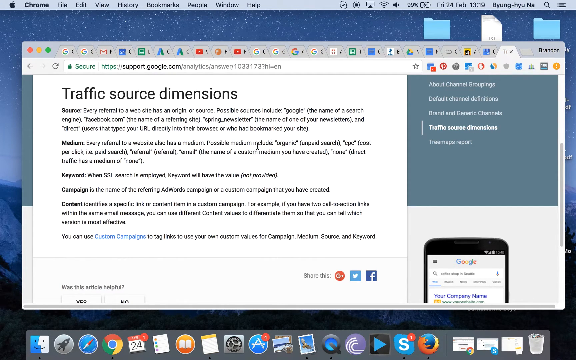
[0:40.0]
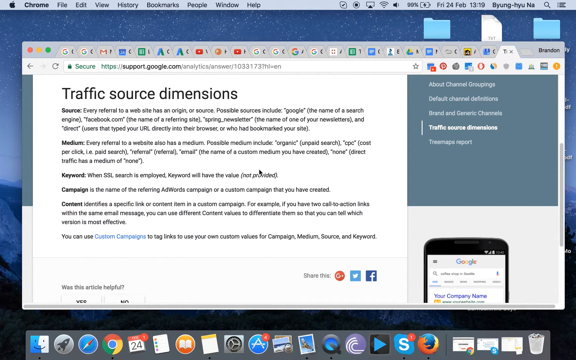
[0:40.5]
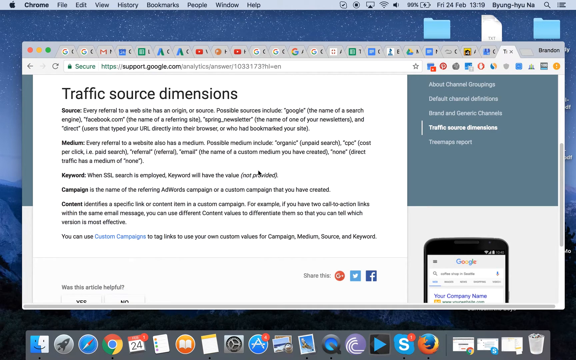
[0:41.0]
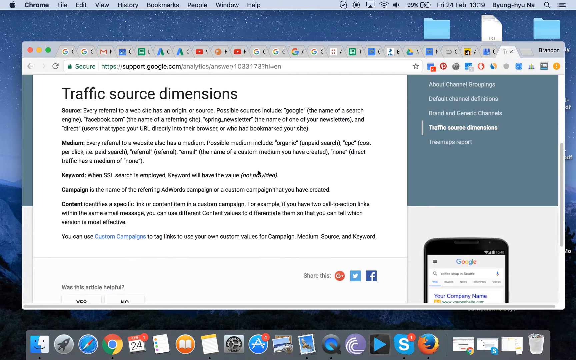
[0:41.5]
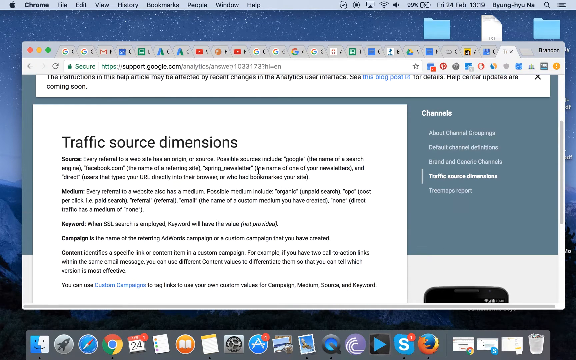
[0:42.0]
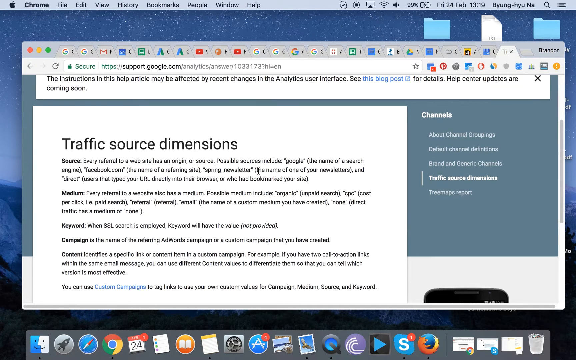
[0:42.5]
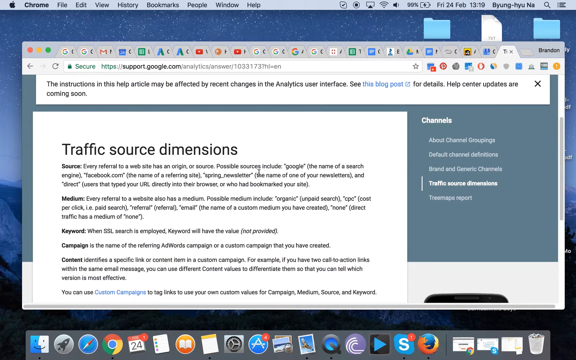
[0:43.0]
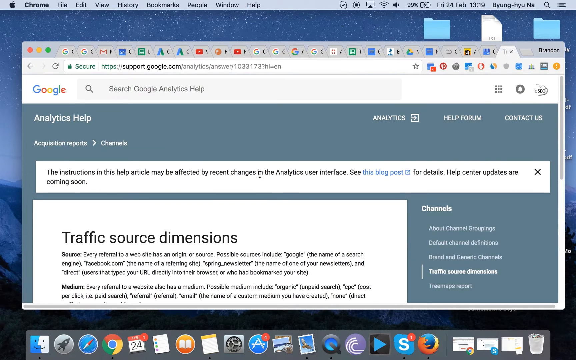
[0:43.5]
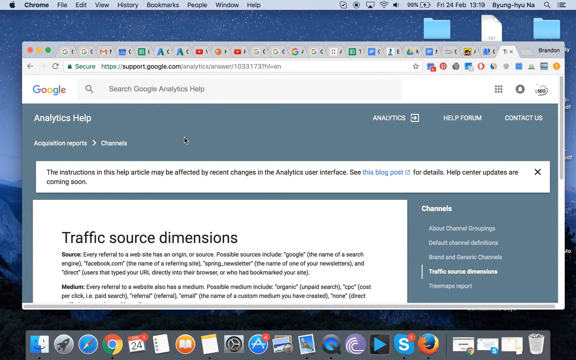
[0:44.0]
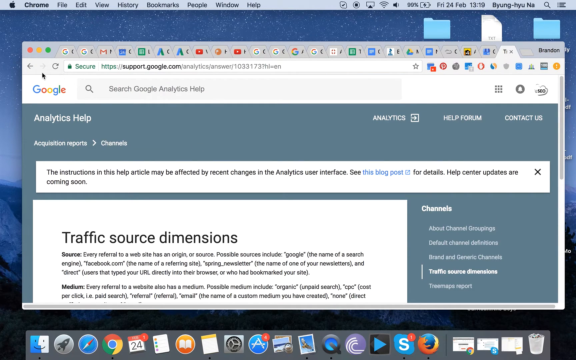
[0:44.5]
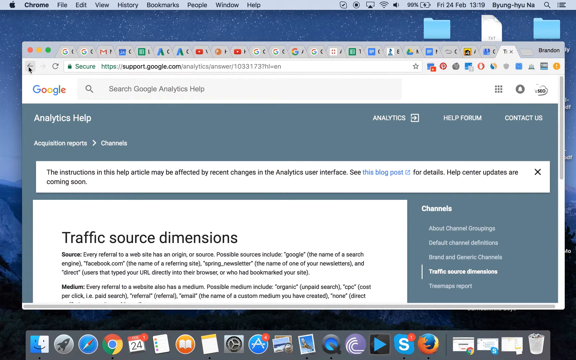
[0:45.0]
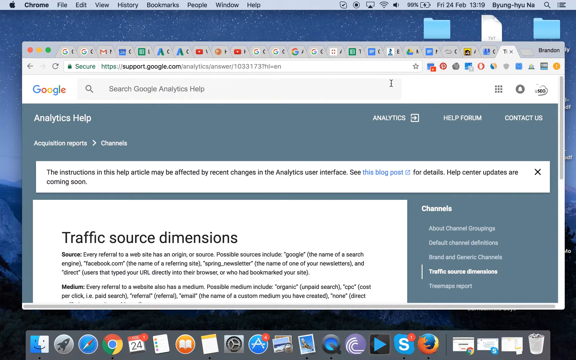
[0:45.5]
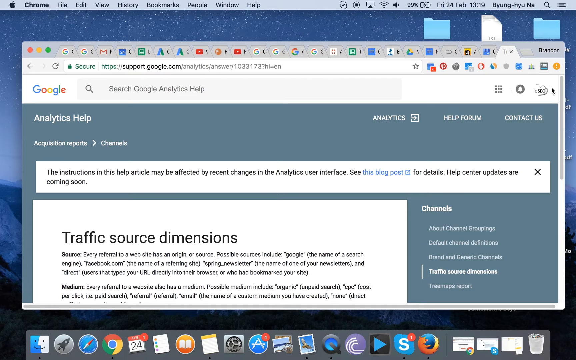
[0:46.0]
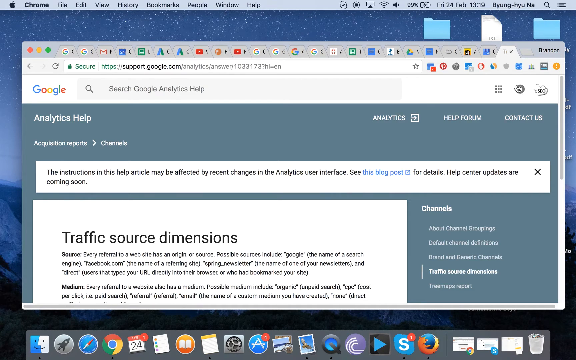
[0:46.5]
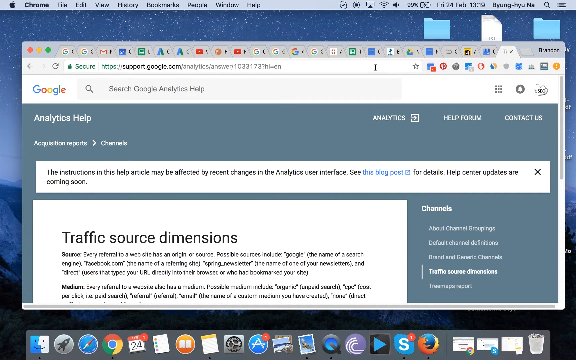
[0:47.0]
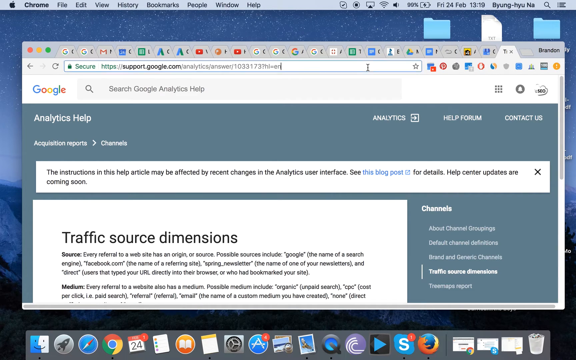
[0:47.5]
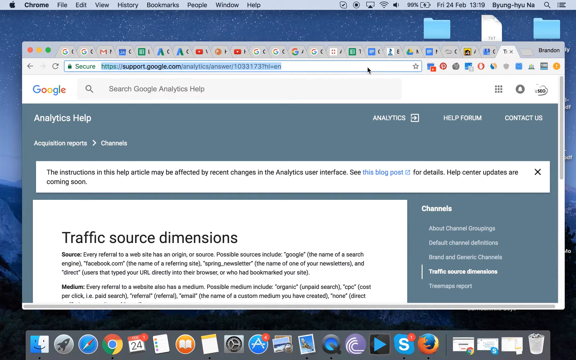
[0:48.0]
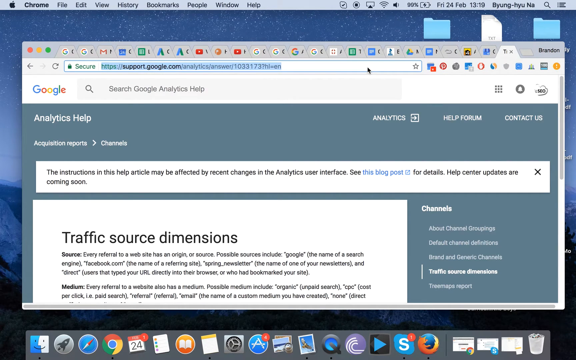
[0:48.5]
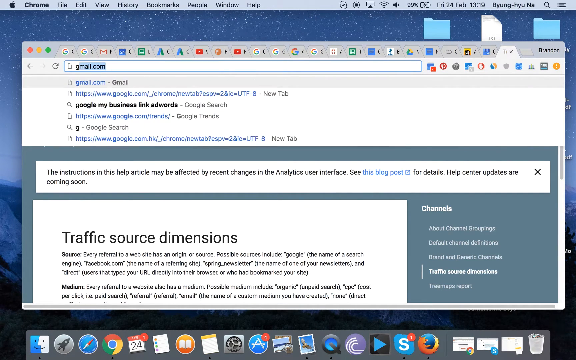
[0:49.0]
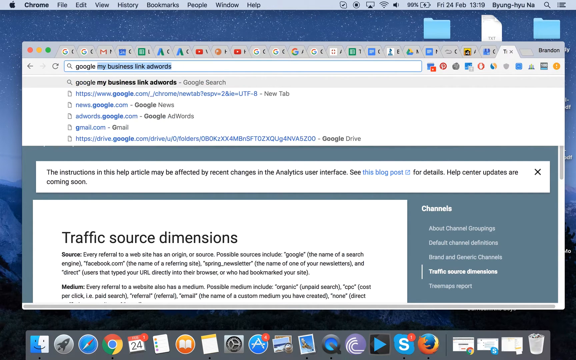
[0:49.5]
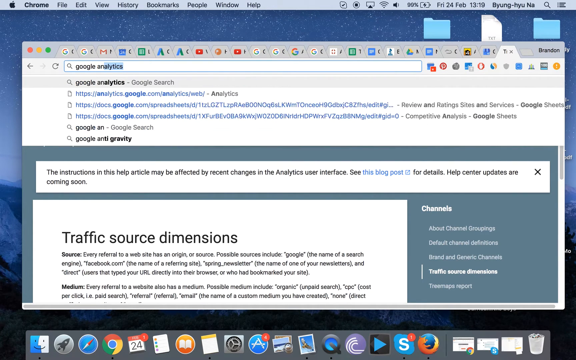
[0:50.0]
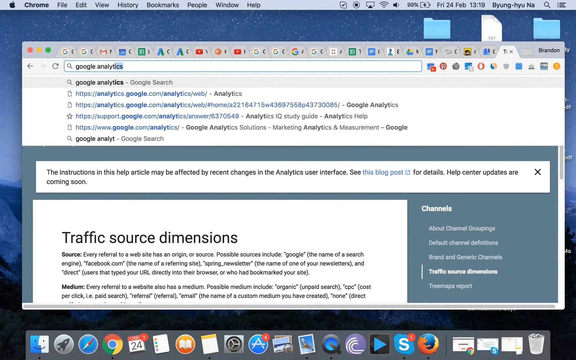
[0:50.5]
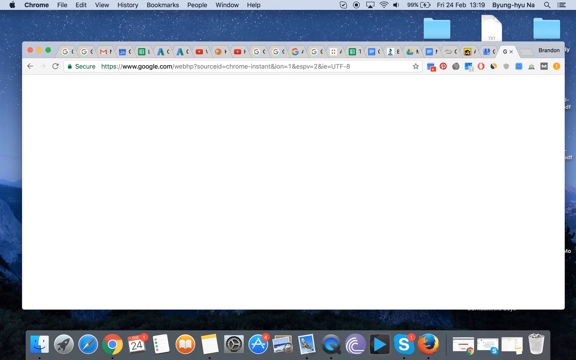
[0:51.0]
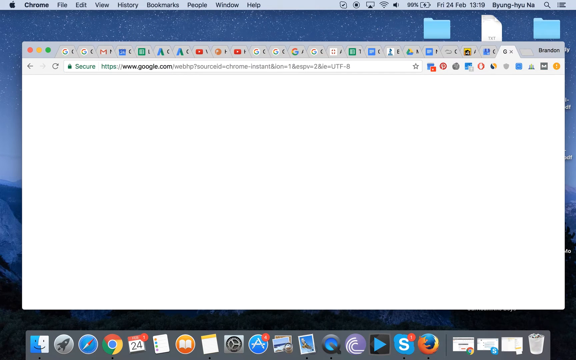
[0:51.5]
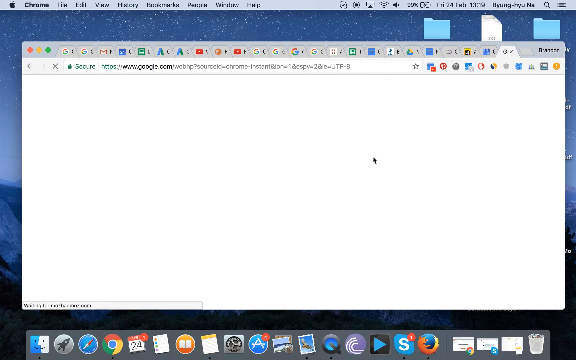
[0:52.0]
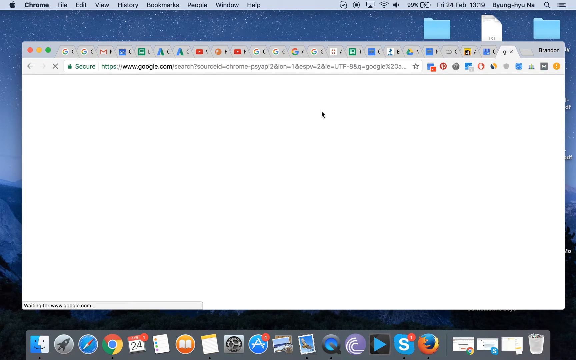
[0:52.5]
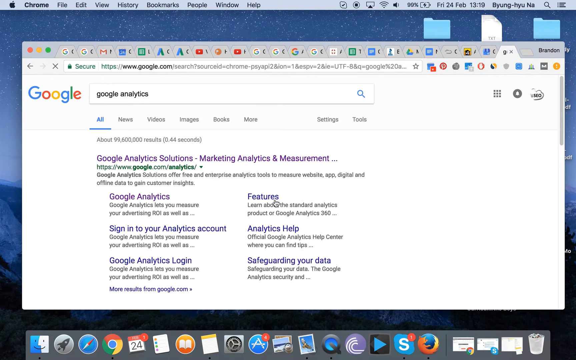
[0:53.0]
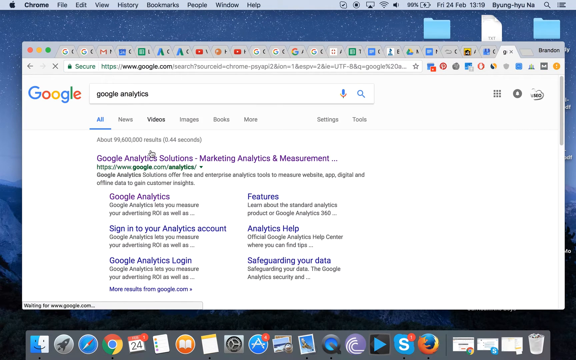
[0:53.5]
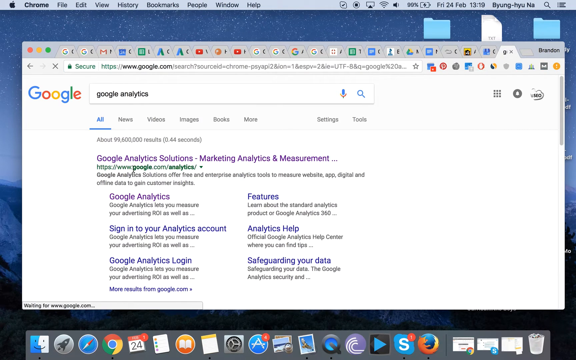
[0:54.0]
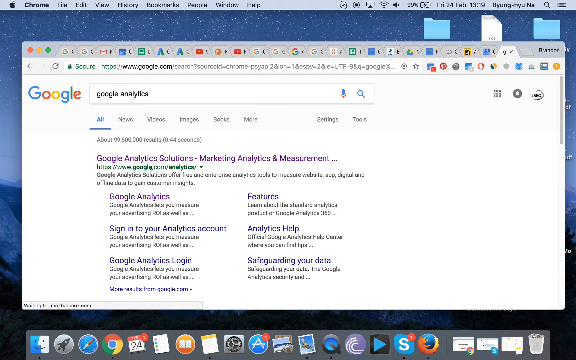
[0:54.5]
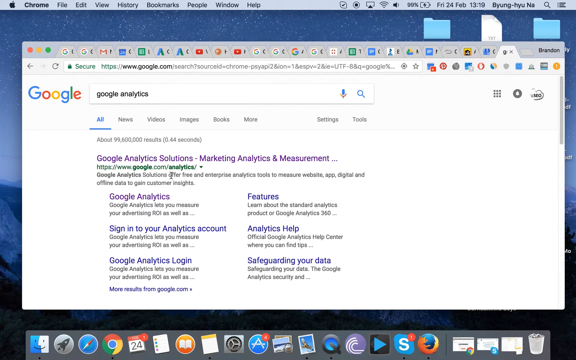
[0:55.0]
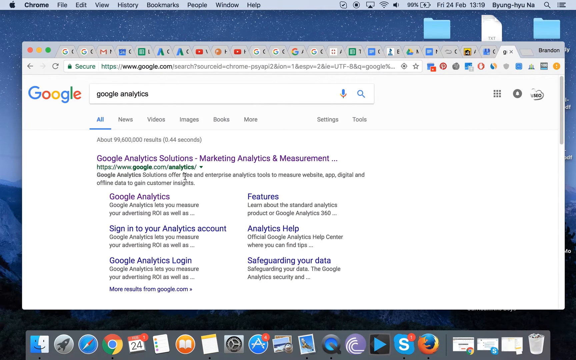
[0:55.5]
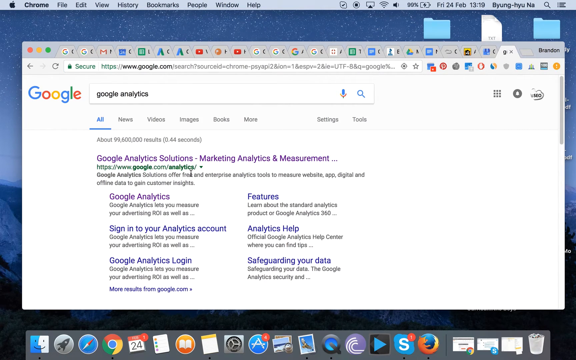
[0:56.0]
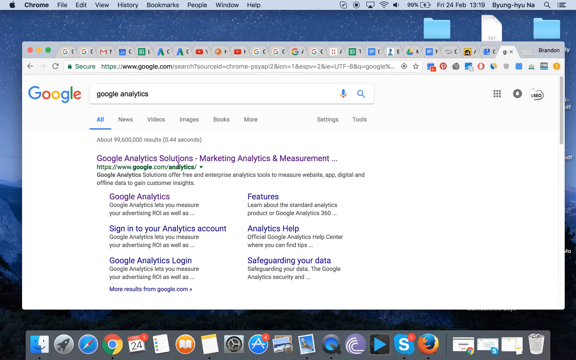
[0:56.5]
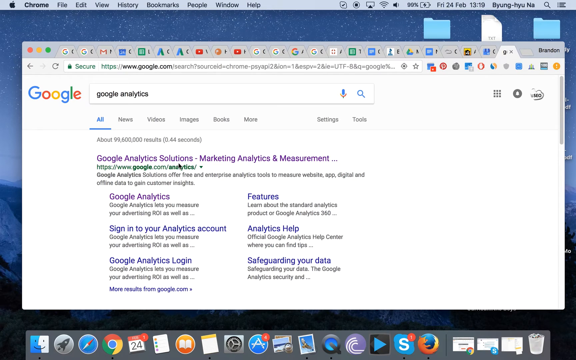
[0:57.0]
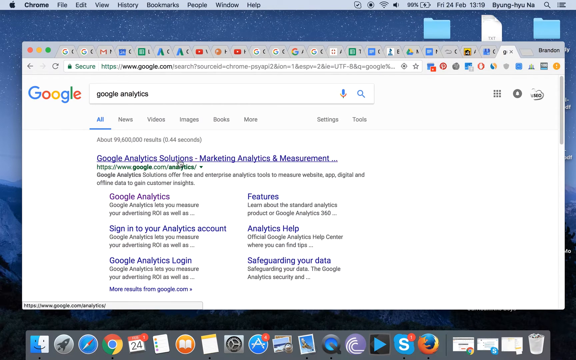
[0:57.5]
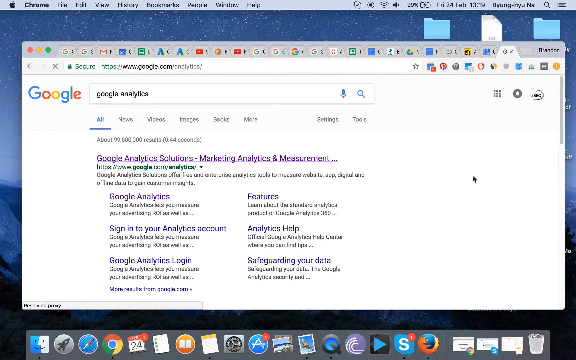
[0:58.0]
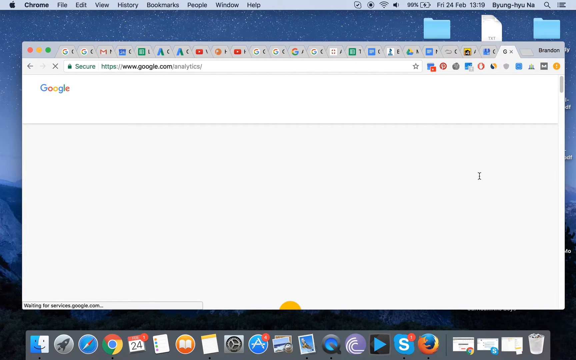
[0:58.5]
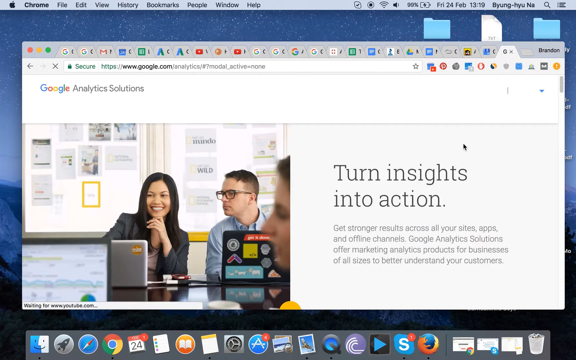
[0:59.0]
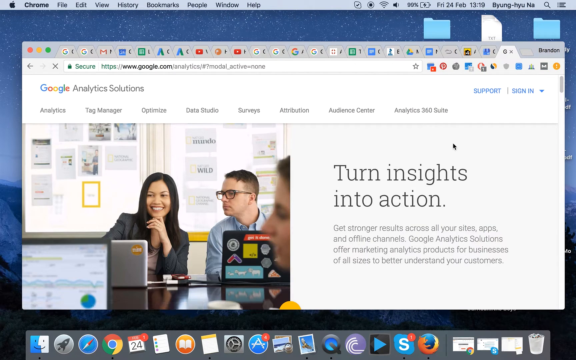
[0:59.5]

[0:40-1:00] A page open on a computer screen has the title "Traffic Source Dimensions" at the top. The user scrolls upward, highlights the page search at the top and types in Google Analytics; a result reads "Google Analytics Solutions". A different page opens that says "Turn Insights into Action". On it, a smiling woman with long black hair, possibly of Asian descent, sits next to a man with her hand up by her head and talks to him. The man has dark hair, wears dark glasses and a blue dress-down shirt, and is looking at her computer screen as well.